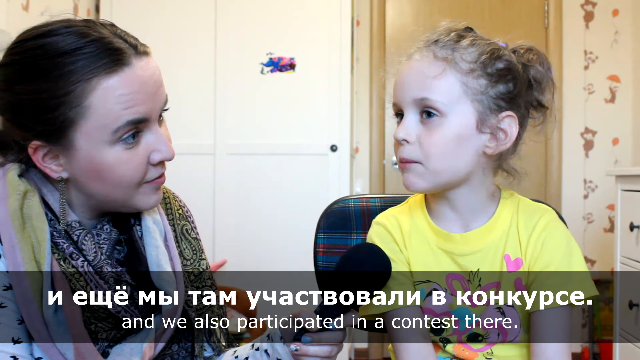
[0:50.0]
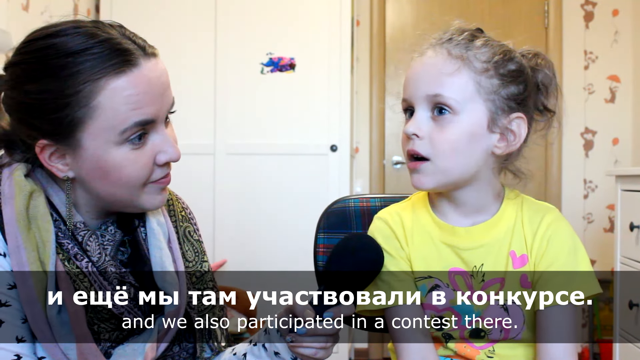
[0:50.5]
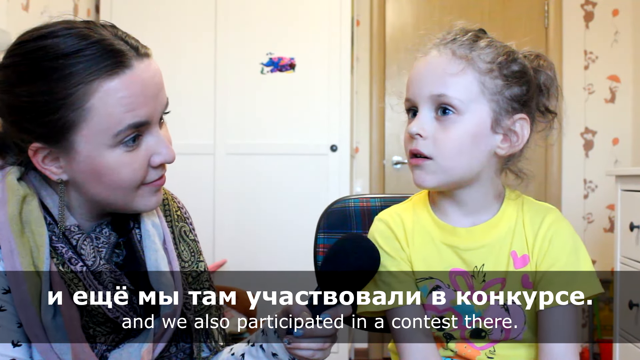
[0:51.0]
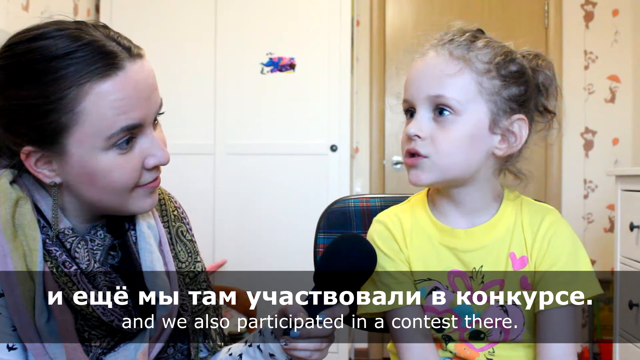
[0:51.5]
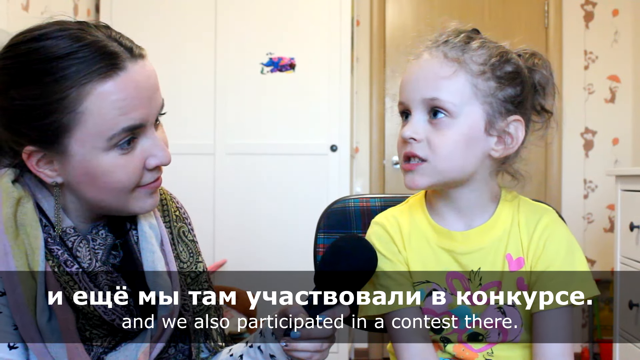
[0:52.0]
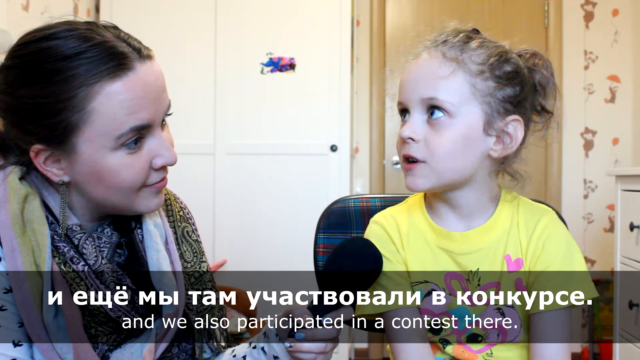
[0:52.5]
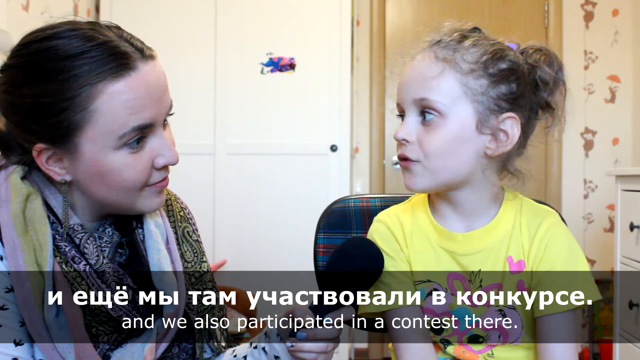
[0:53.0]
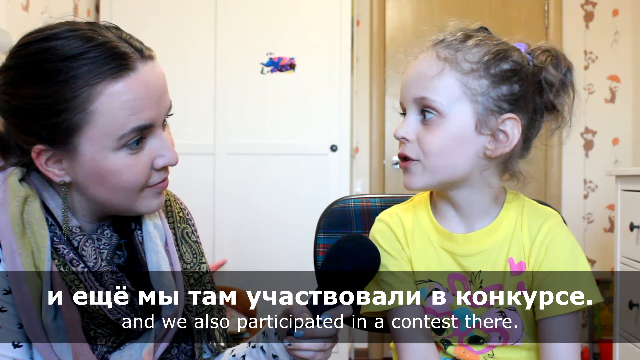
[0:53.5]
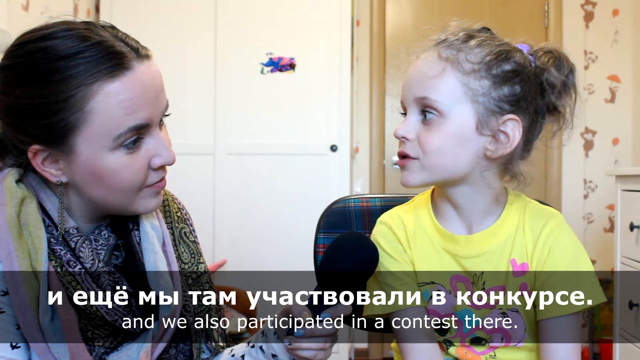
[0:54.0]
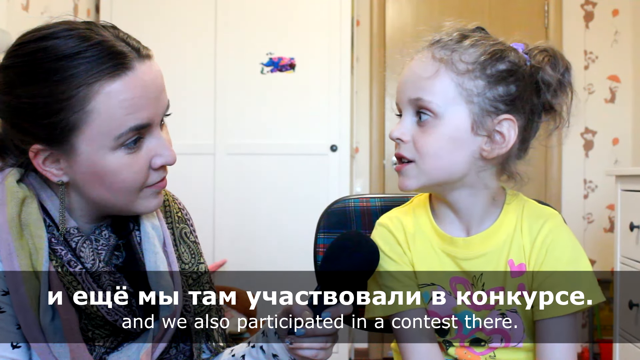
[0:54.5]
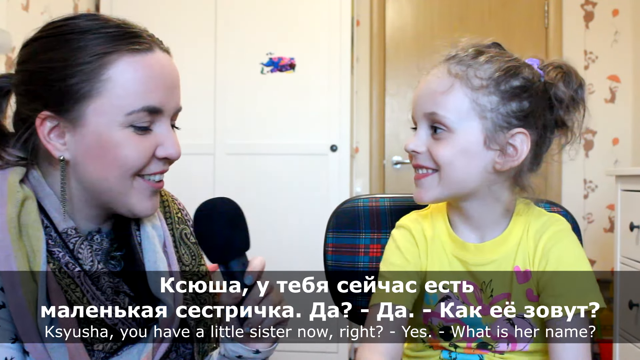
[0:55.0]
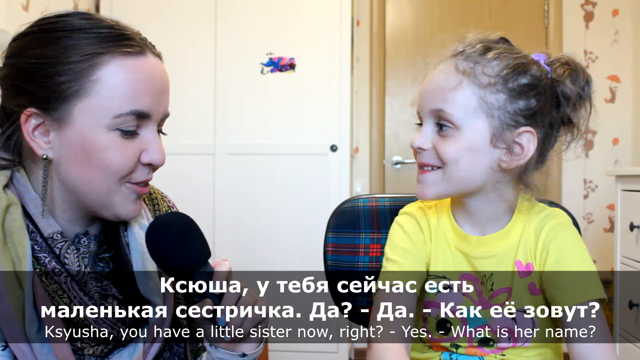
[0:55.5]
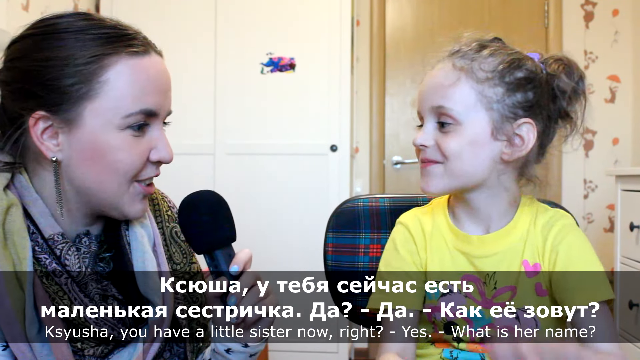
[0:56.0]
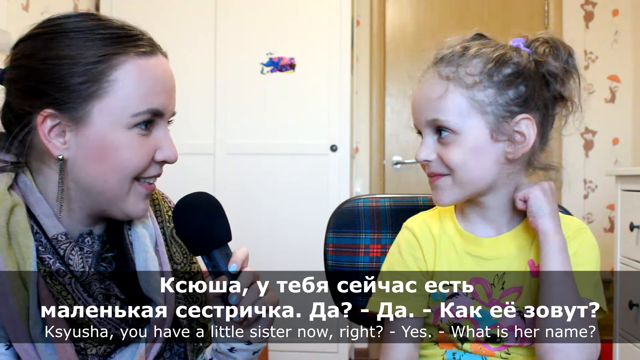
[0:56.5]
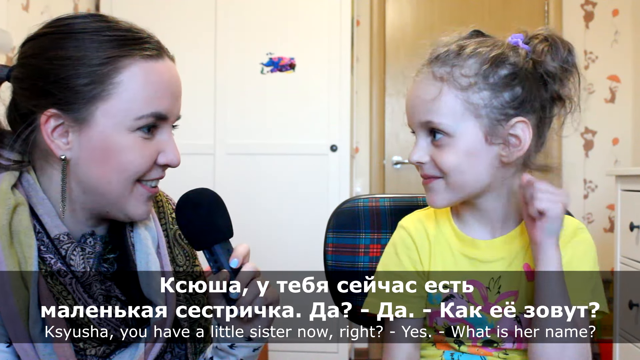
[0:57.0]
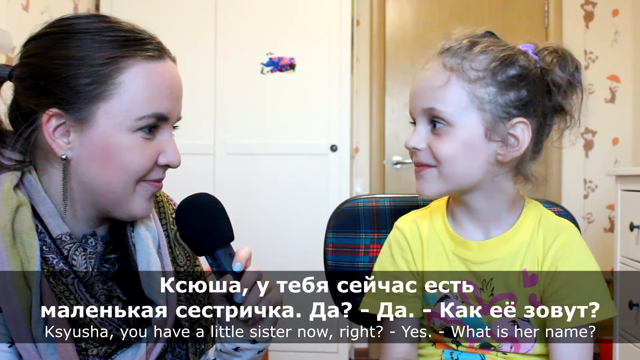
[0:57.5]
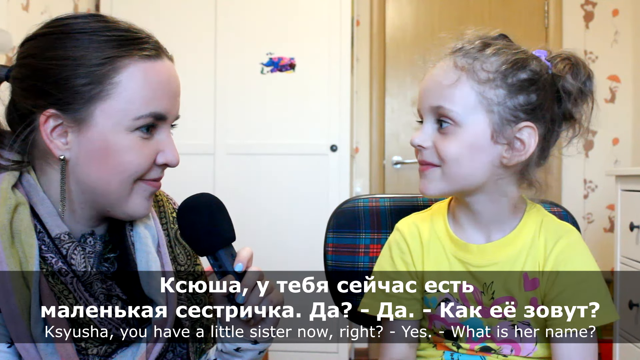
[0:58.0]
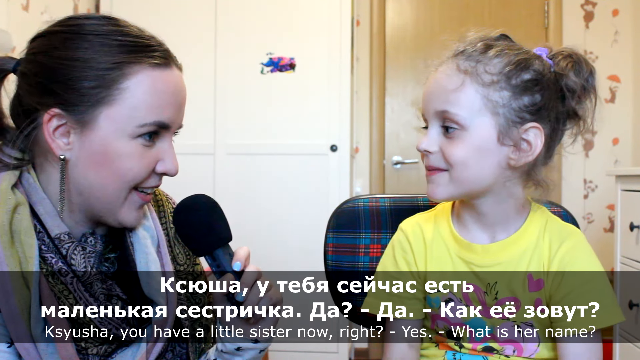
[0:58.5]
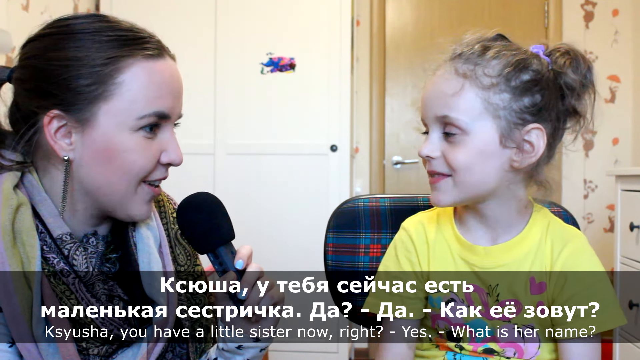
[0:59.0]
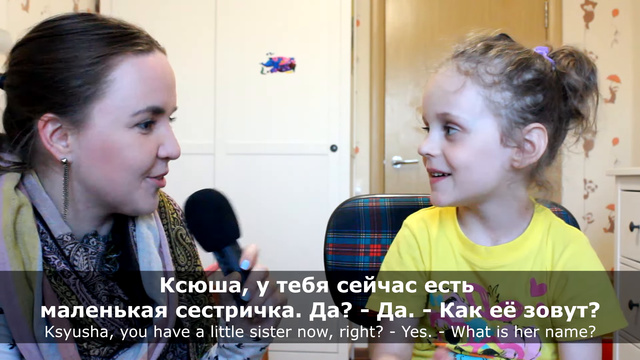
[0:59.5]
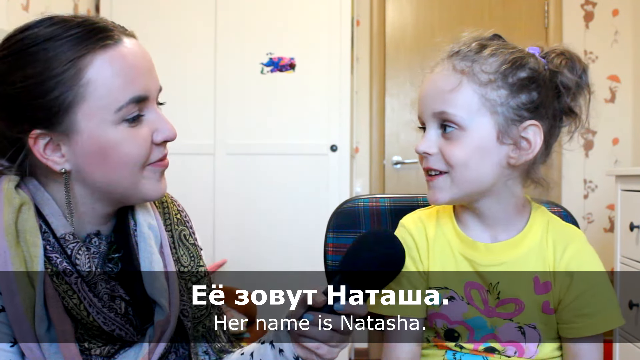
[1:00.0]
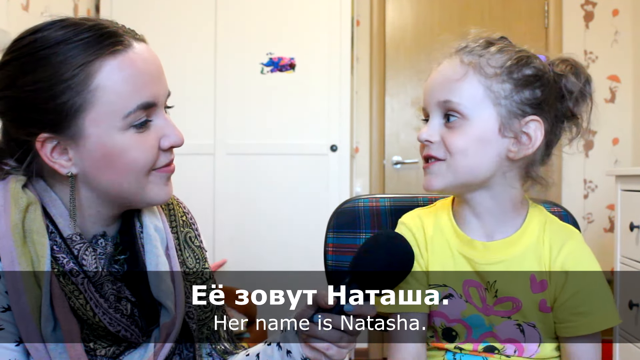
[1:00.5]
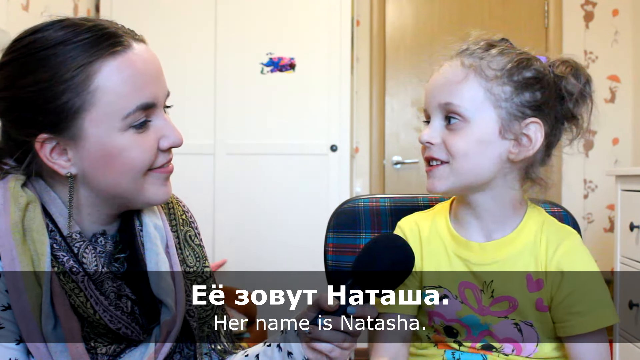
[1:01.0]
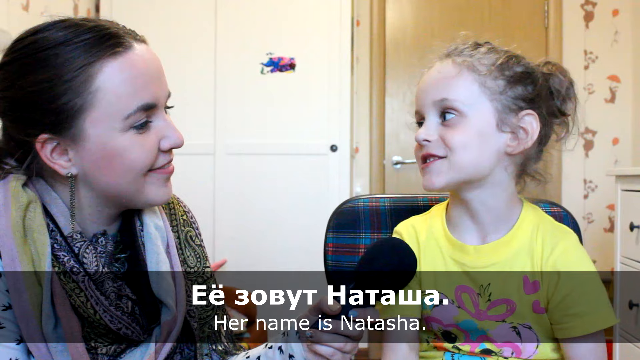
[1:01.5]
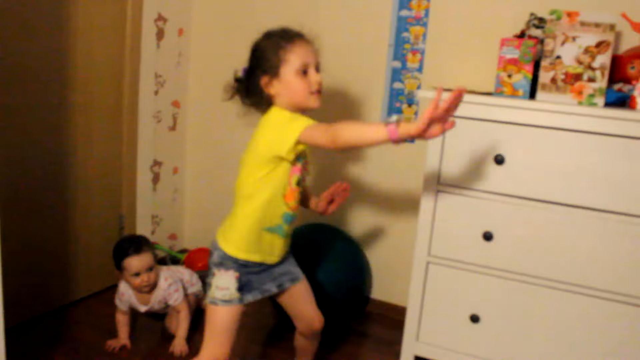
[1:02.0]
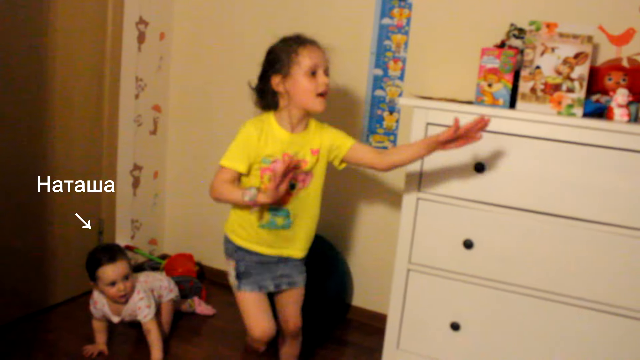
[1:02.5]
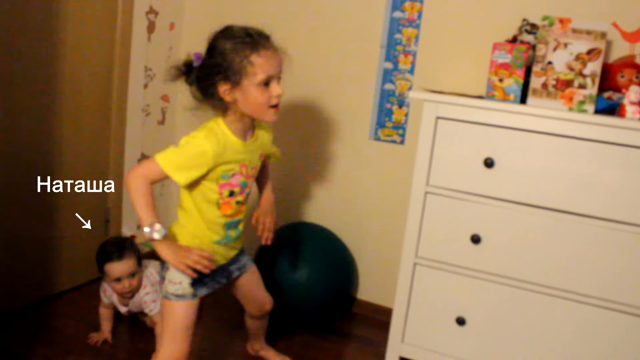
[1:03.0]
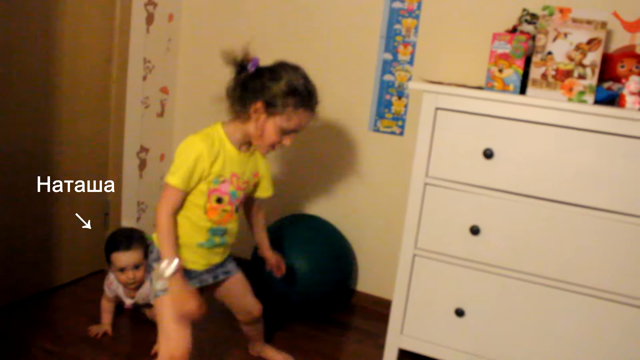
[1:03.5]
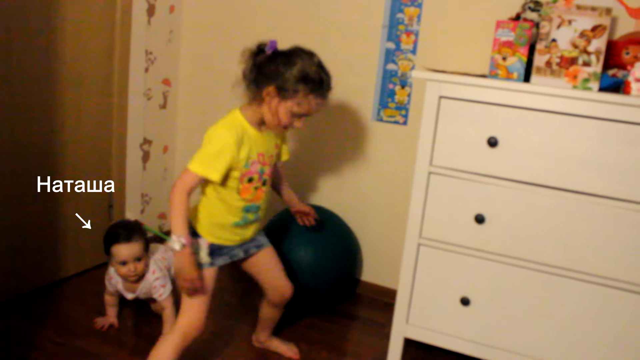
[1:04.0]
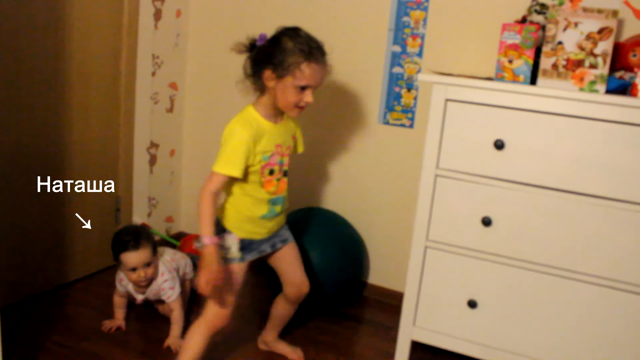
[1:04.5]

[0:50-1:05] While the girl is talking about her kindergarten, the woman says, "Ksyusha, Ksyusha, you have a little sister now, right?" The girl says yes, and when asked the sister's name, says Natasha. The video then cuts to inset footage of Ksyusha dancing and clapping her hands at home, apparently with her baby sister, in a different room where both are further away. The baby looks like she is crawling on the floor behind her and is maybe one year old. This room has a darker carpet, a white chest of drawers, and stickers and charts on the walls. A white arrow points to the baby, with a label in Cyrillic reading Natasha.